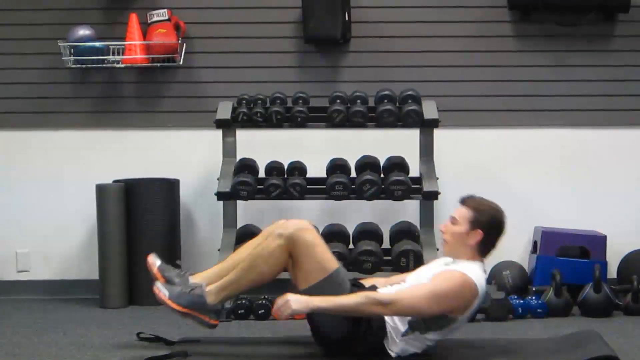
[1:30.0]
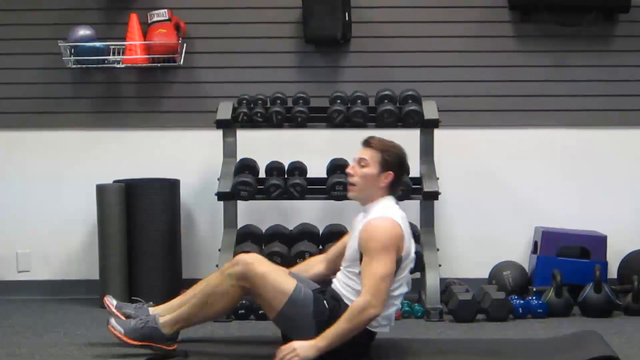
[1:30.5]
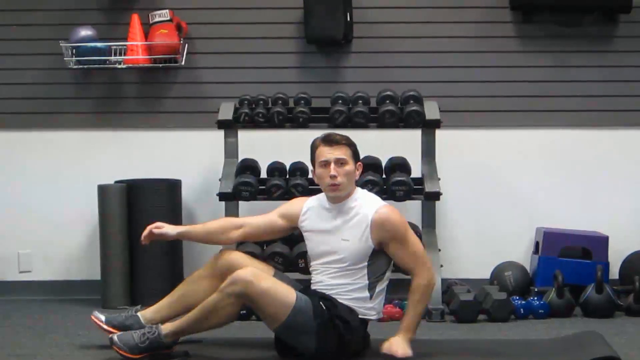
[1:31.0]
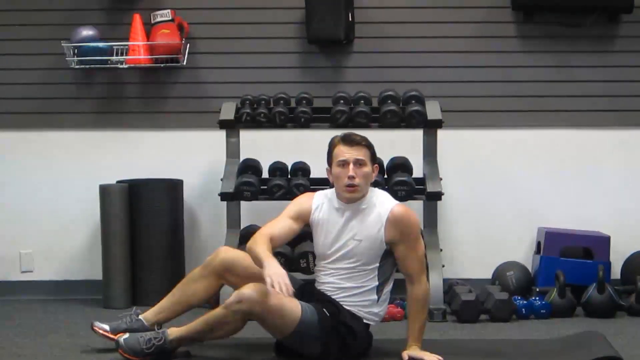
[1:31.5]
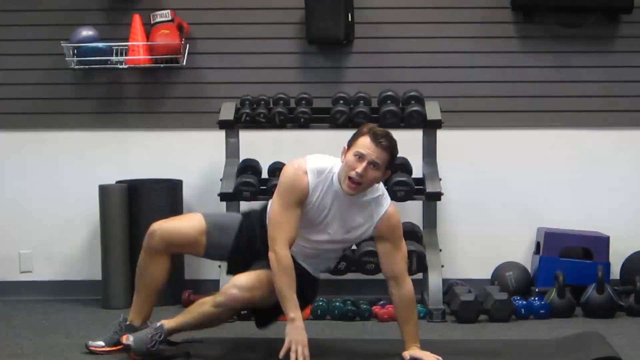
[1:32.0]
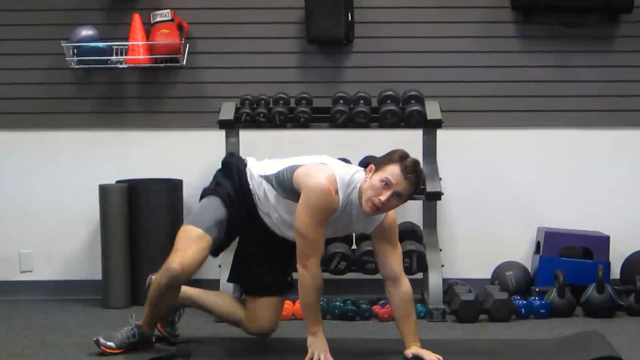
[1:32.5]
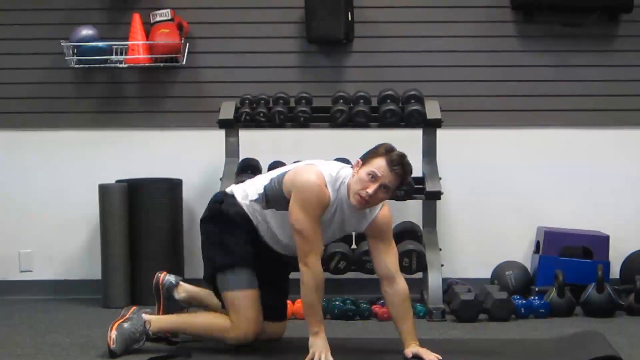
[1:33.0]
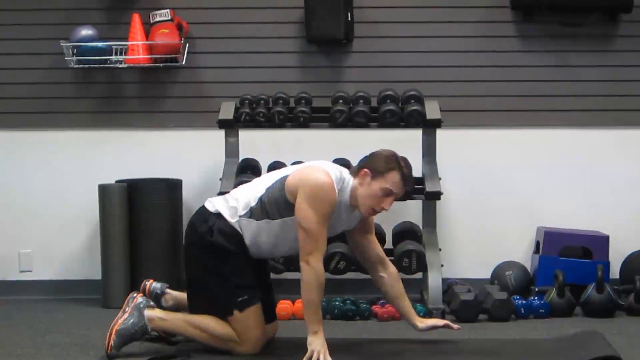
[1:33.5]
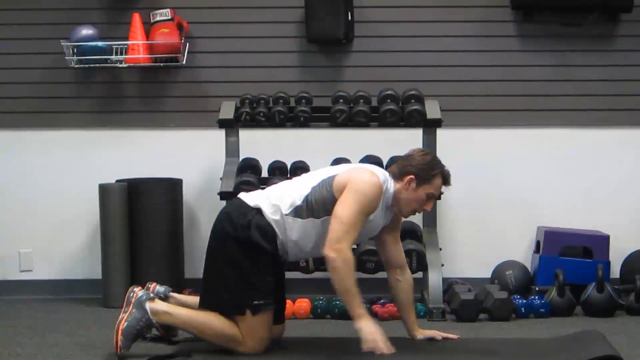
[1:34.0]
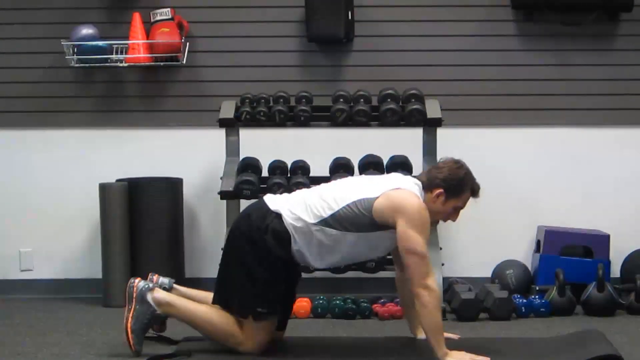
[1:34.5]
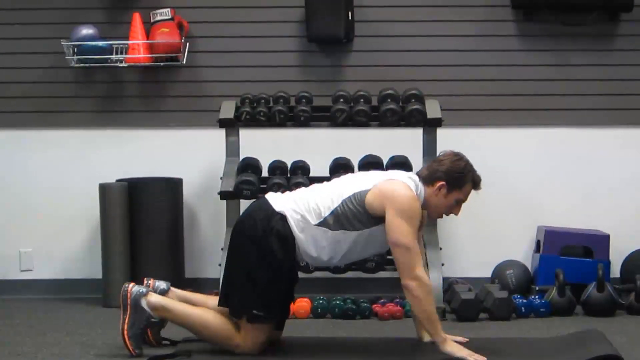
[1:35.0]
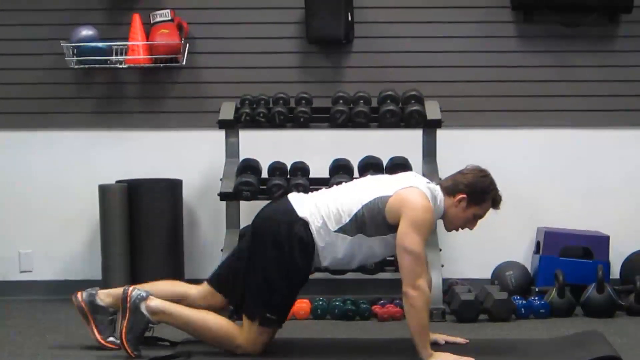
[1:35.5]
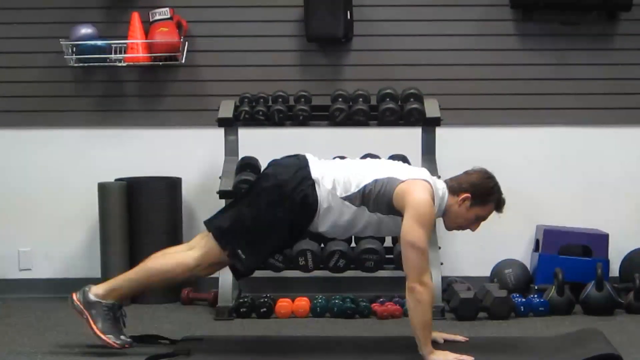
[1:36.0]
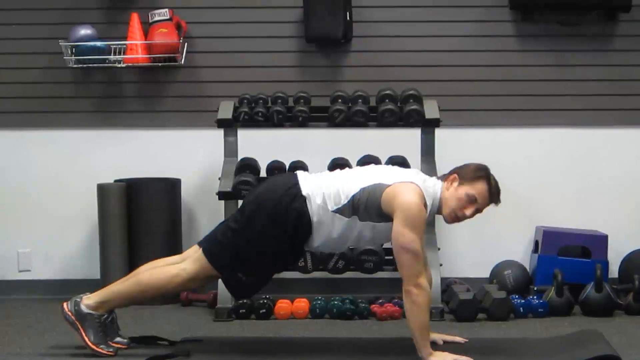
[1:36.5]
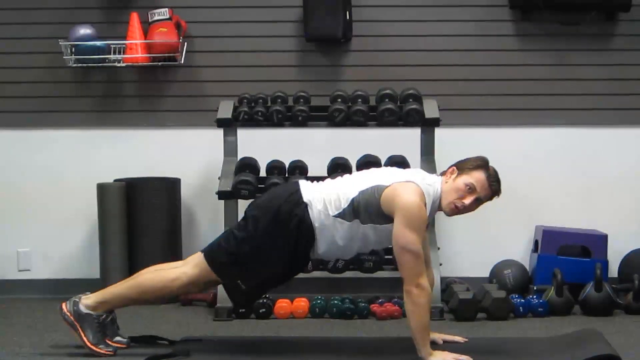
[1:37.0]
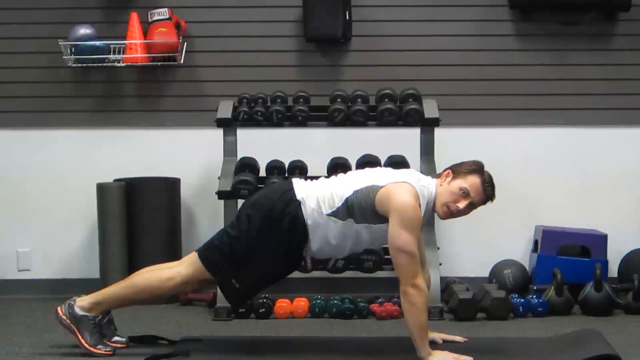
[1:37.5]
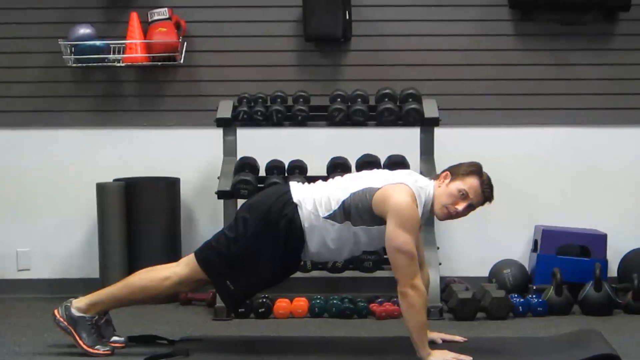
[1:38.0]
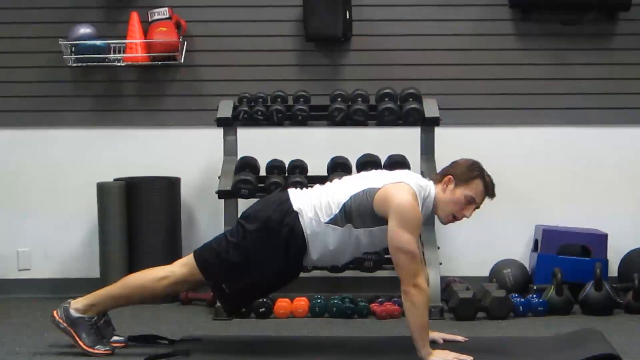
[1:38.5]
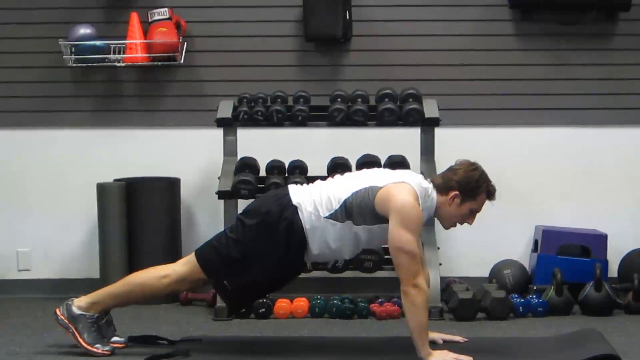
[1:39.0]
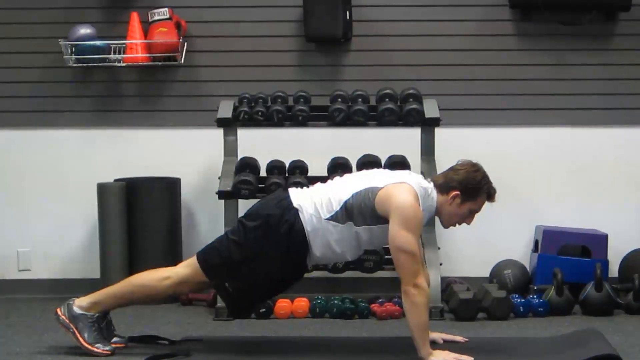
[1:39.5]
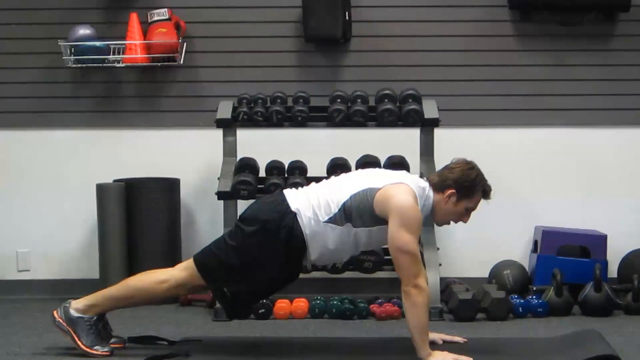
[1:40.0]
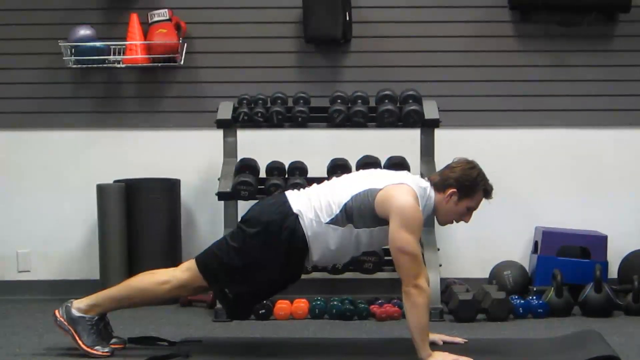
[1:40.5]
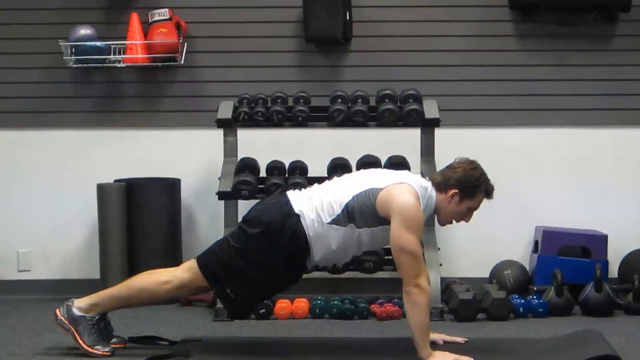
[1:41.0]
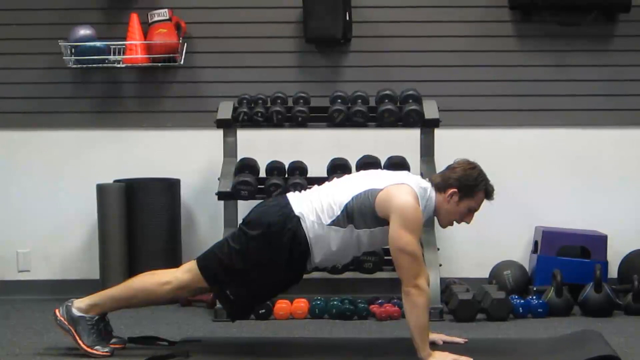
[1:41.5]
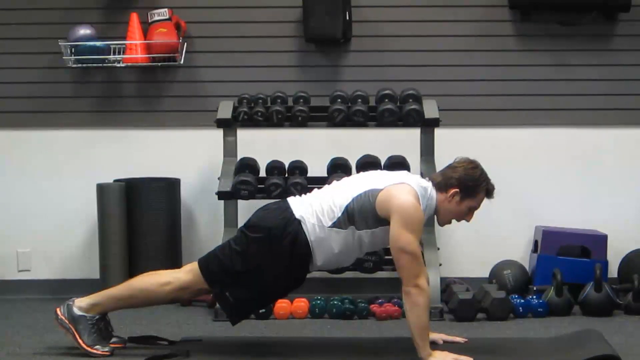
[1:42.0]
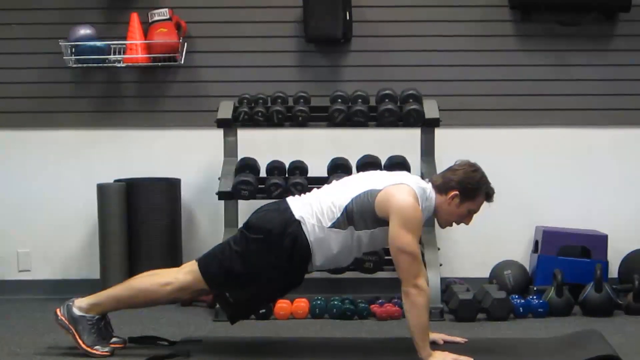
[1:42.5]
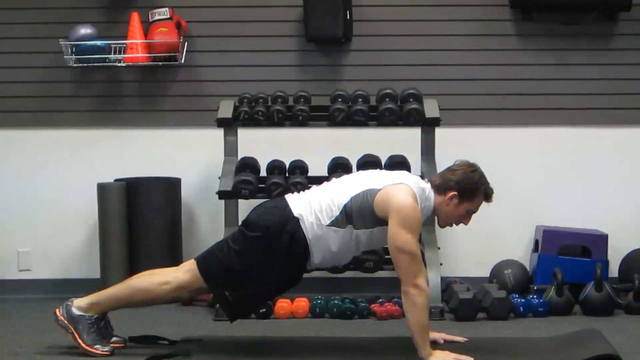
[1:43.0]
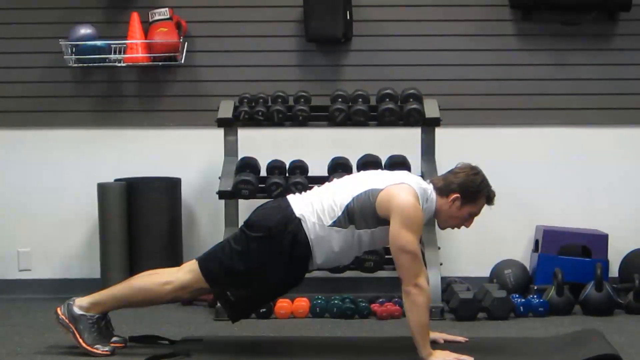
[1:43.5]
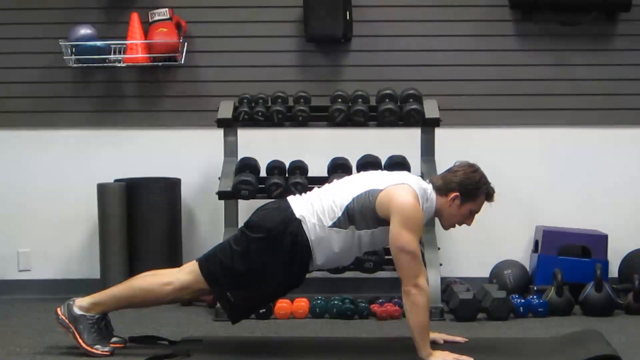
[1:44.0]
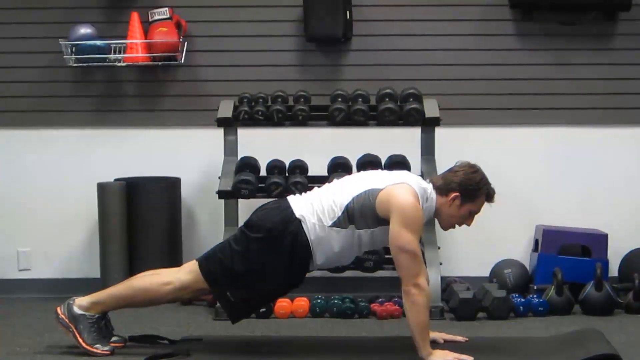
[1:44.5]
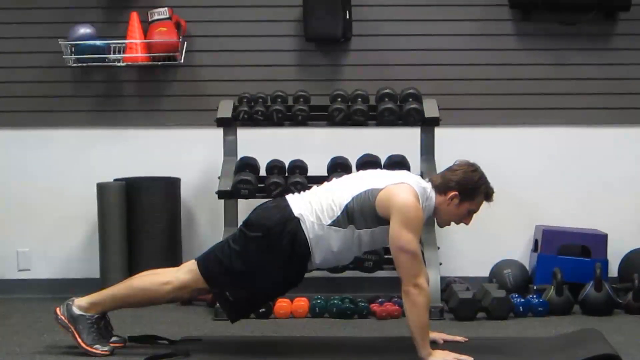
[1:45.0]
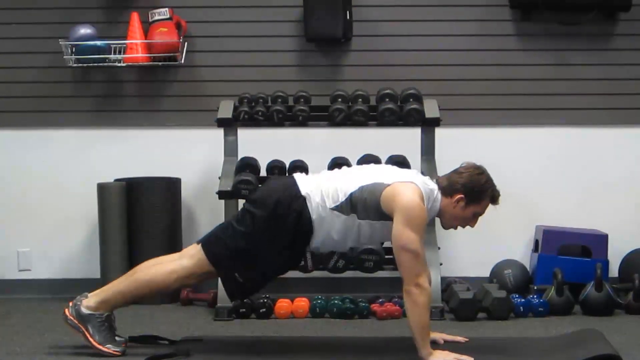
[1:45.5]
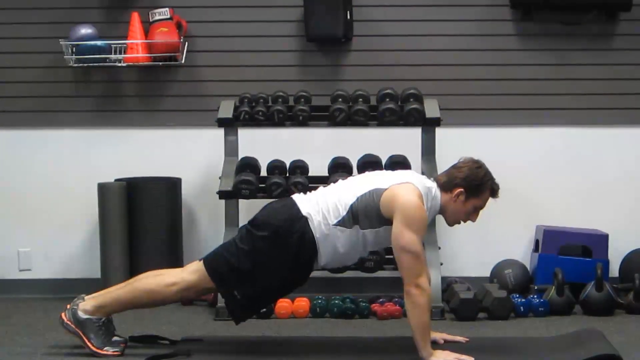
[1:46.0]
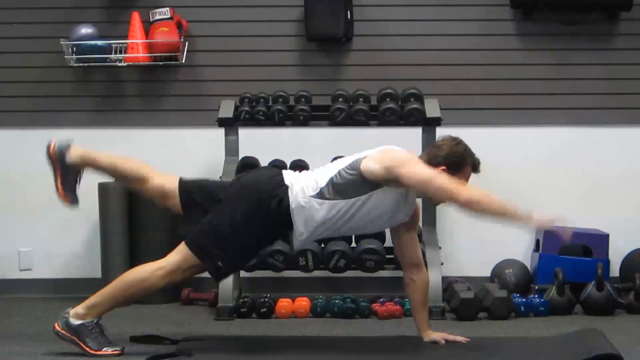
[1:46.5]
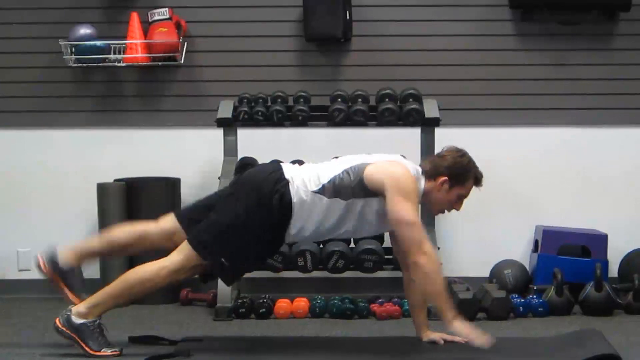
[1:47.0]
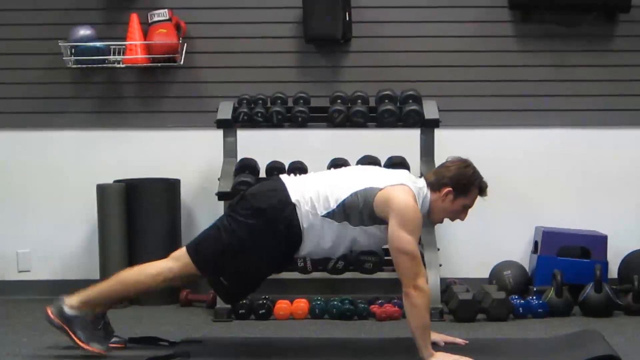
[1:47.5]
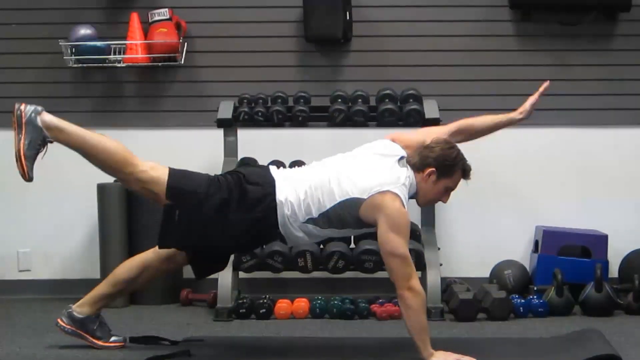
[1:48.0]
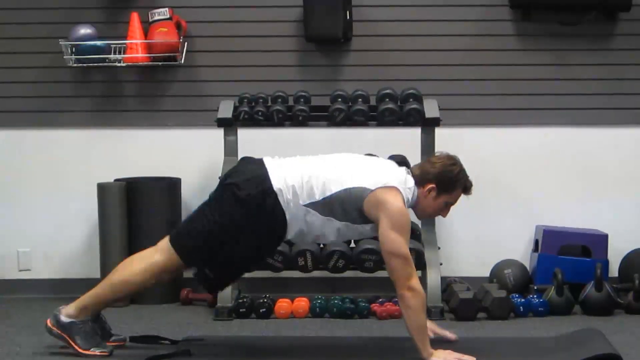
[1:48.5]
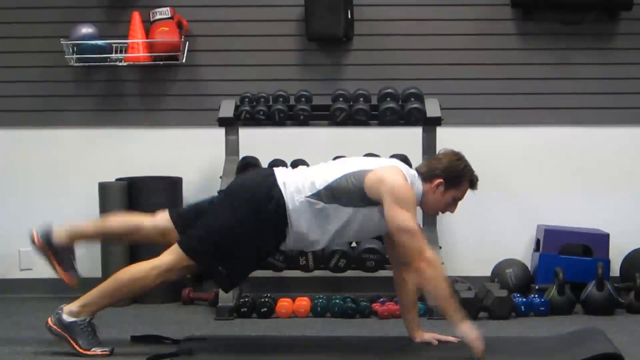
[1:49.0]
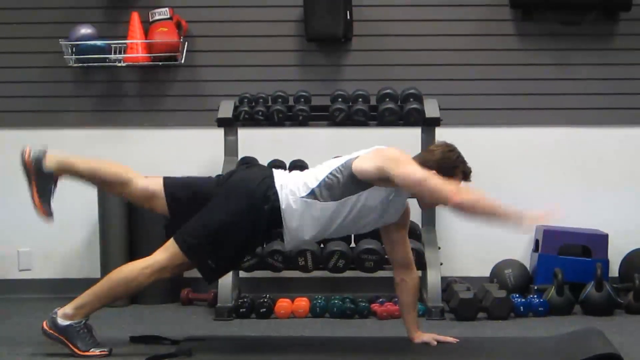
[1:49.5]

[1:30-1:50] The man bends his feet down, knees locked, pushes his legs flat on the ground and pushes his whole upper body up. He turns toward the camera while sitting with his legs down and his body up, seemingly to talk to the camera. He uses his left arm to push his body up, then his right arm, and turns his whole body into what seems to be a push-up position, with his arms to the side, his face forward and his back up. On his knees, he pushes his left leg back first, then his right leg, and turns his face toward the camera on his right, keeping his body slightly bent yet straight while talking and breathing. He then lifts his right arm while bringing his left leg up, then does the opposite with his right leg and left arm up, getting ready for a push-up.